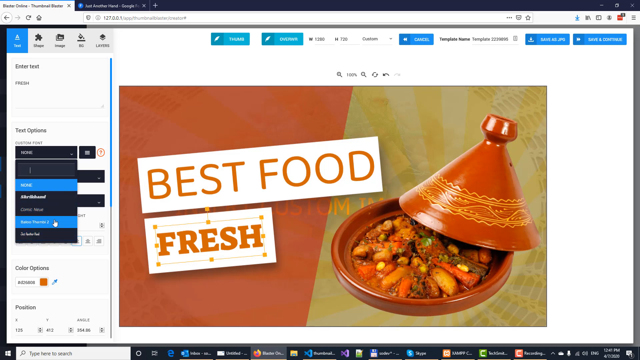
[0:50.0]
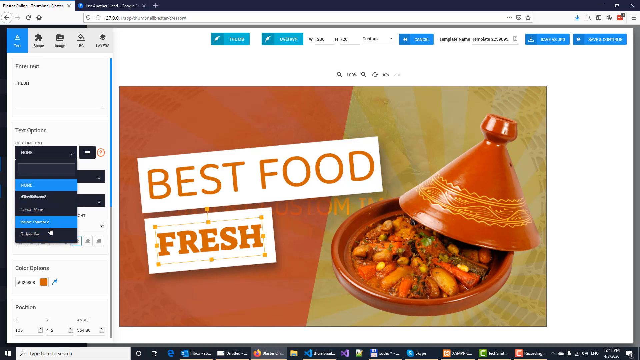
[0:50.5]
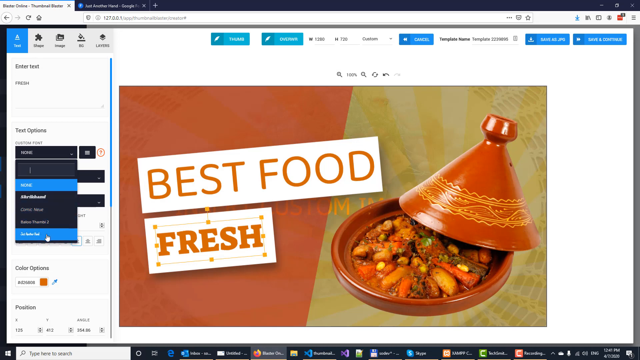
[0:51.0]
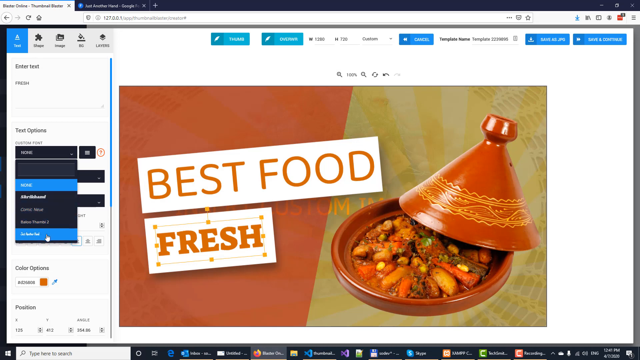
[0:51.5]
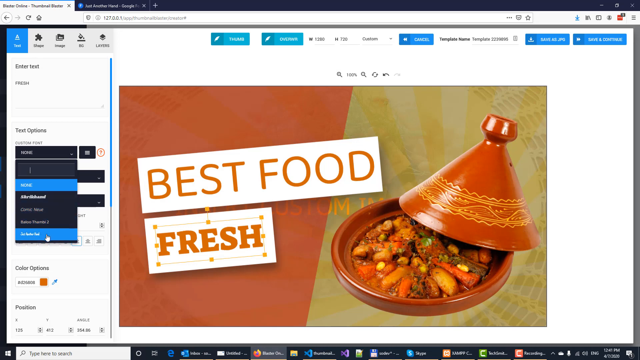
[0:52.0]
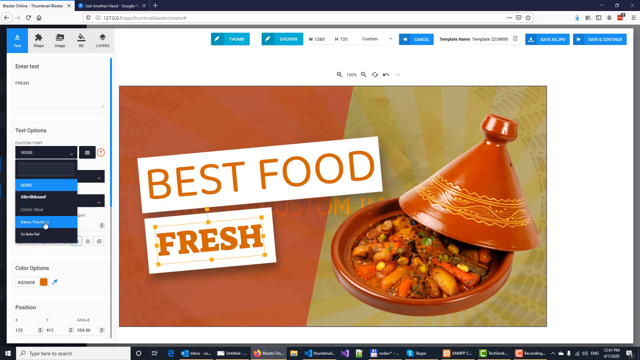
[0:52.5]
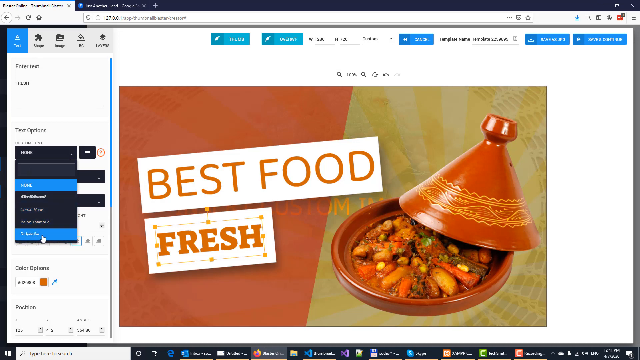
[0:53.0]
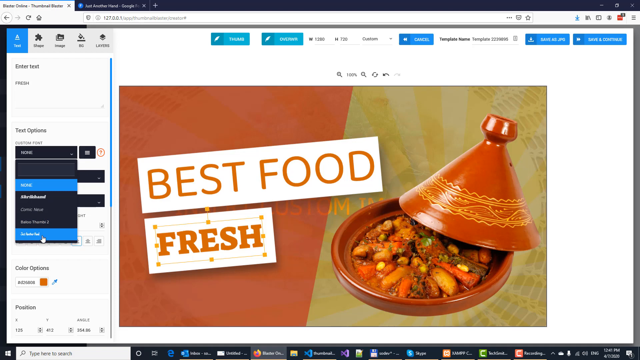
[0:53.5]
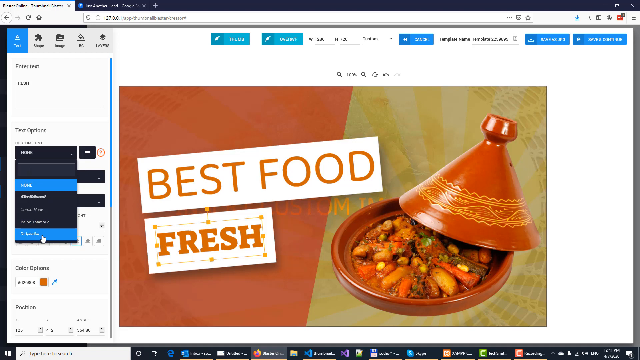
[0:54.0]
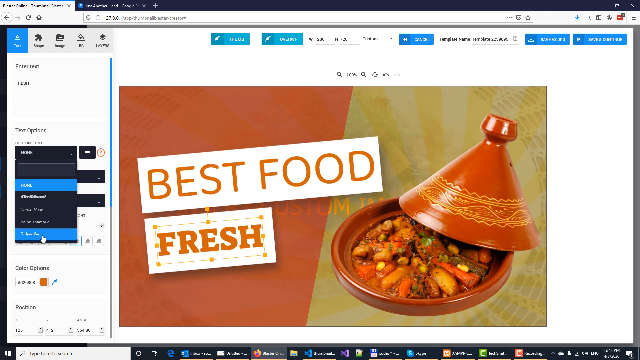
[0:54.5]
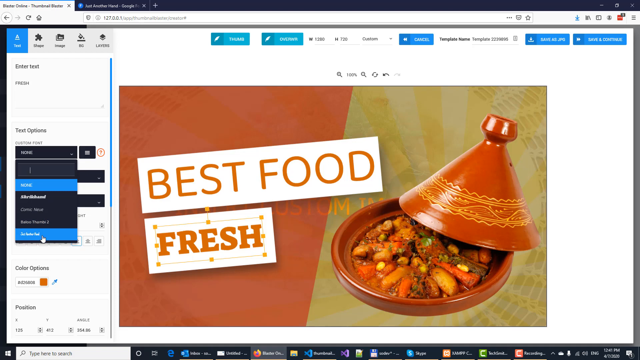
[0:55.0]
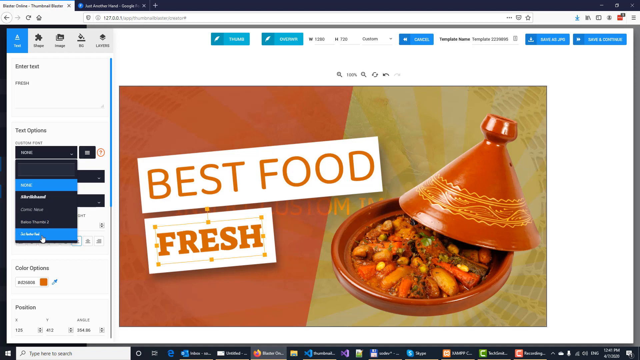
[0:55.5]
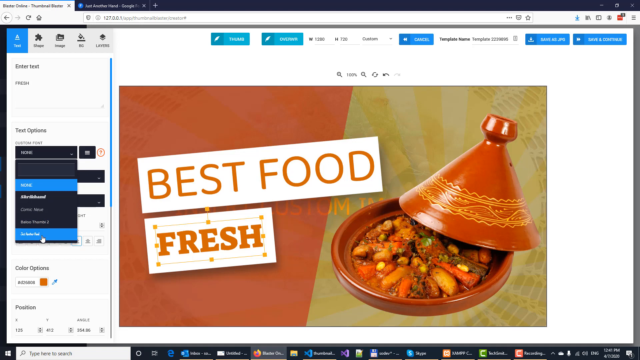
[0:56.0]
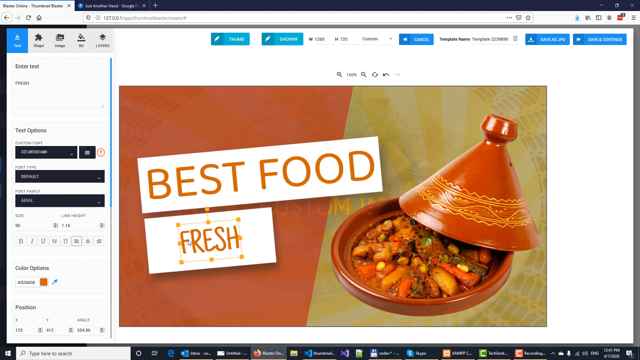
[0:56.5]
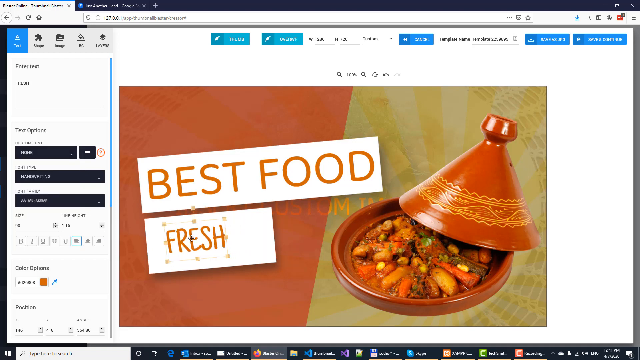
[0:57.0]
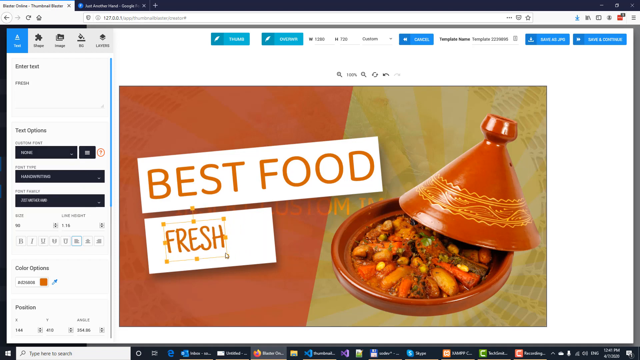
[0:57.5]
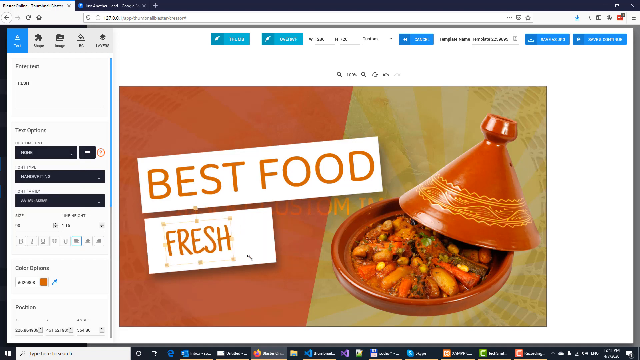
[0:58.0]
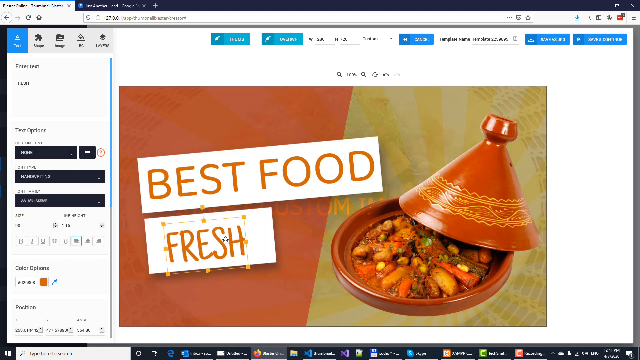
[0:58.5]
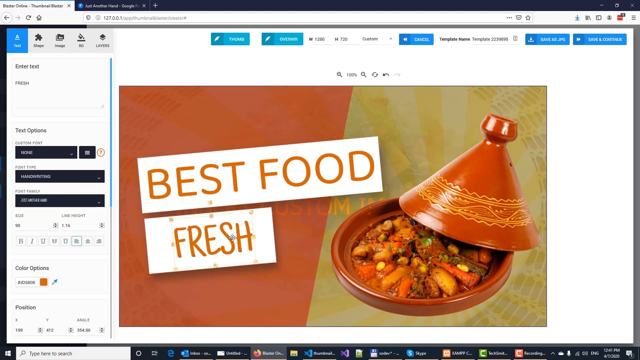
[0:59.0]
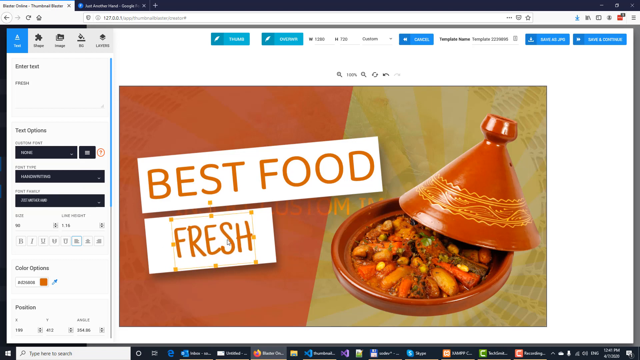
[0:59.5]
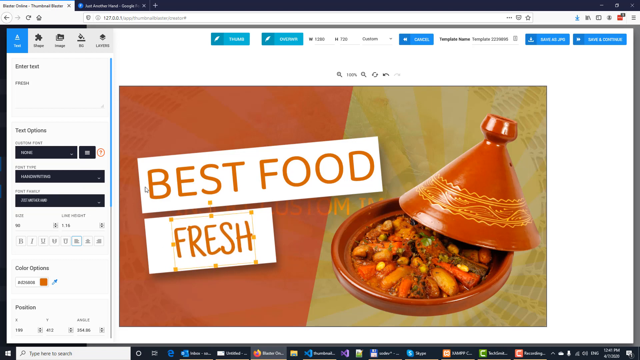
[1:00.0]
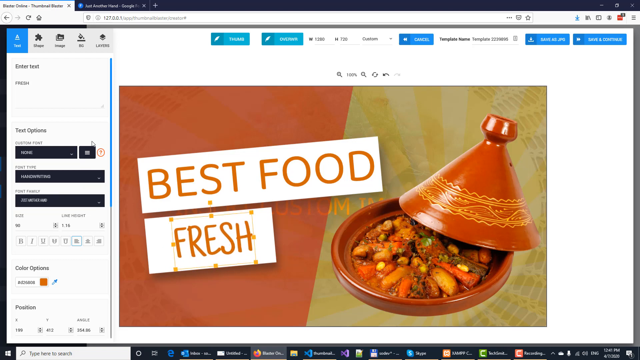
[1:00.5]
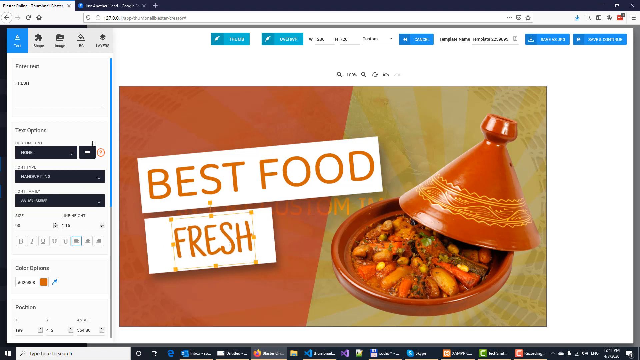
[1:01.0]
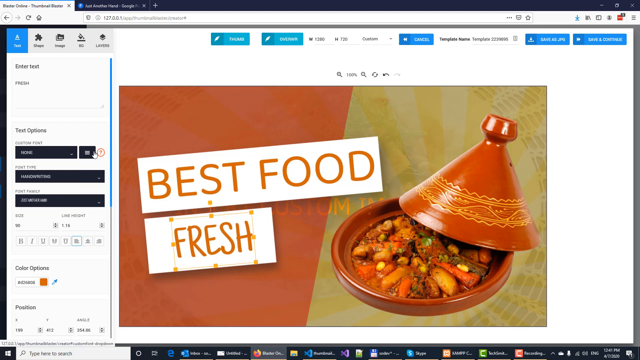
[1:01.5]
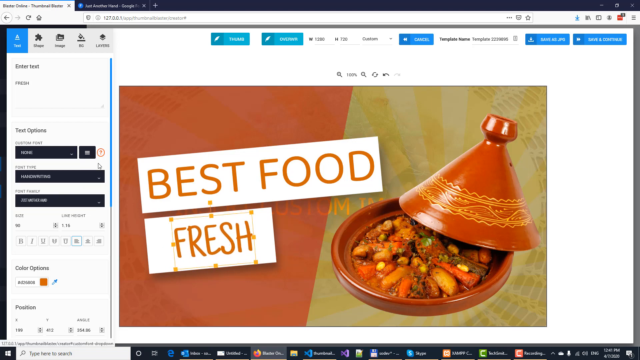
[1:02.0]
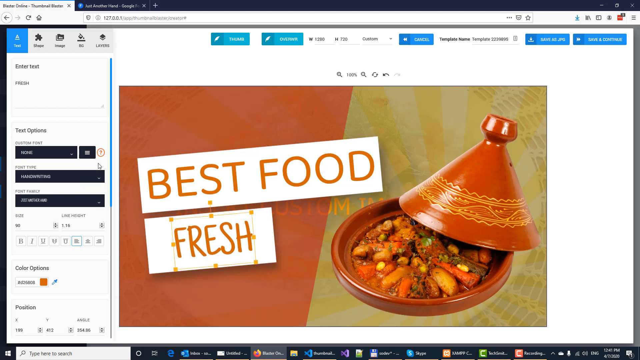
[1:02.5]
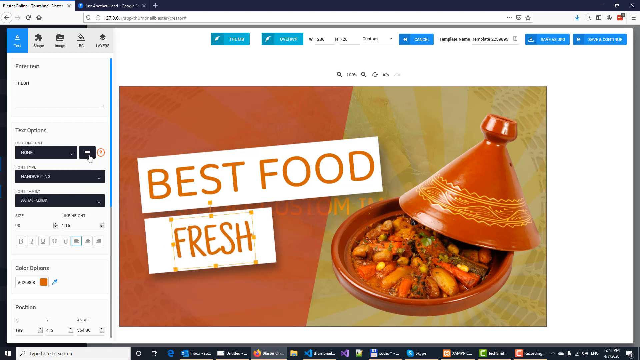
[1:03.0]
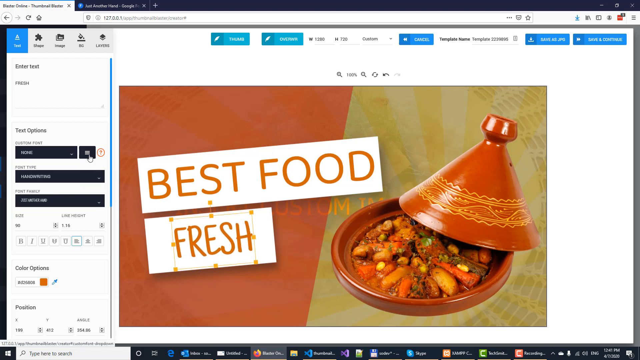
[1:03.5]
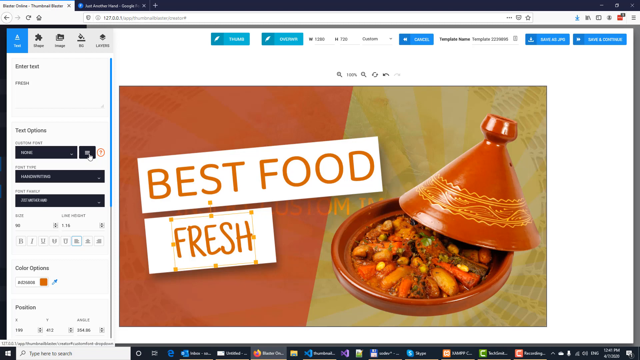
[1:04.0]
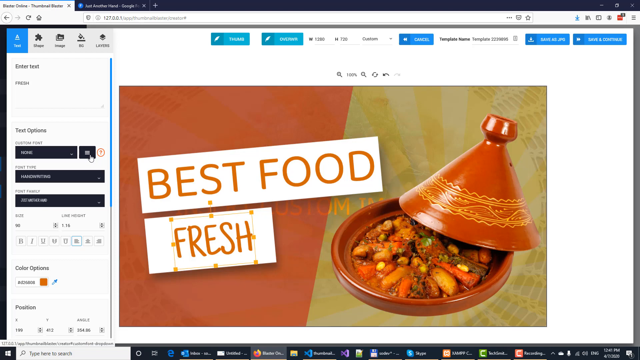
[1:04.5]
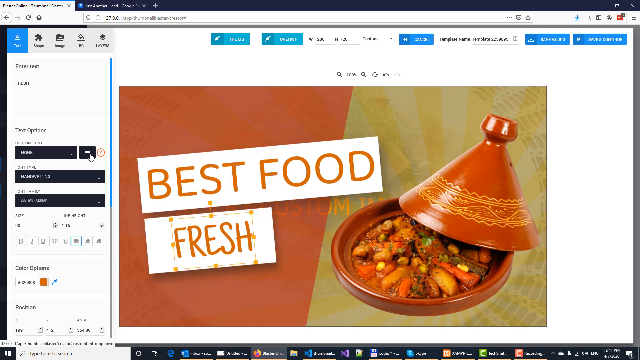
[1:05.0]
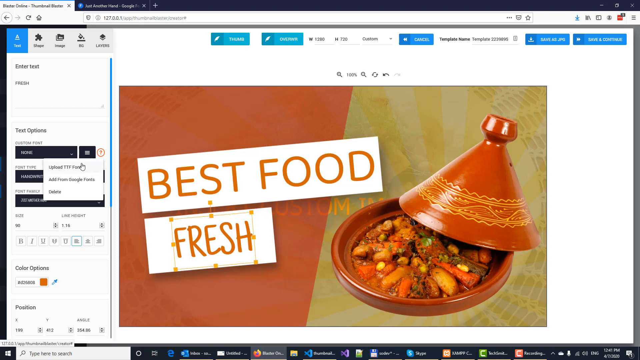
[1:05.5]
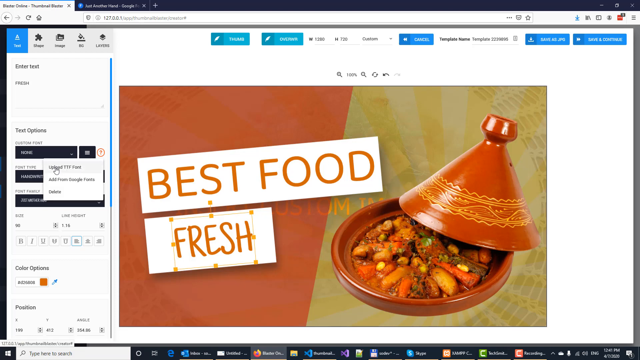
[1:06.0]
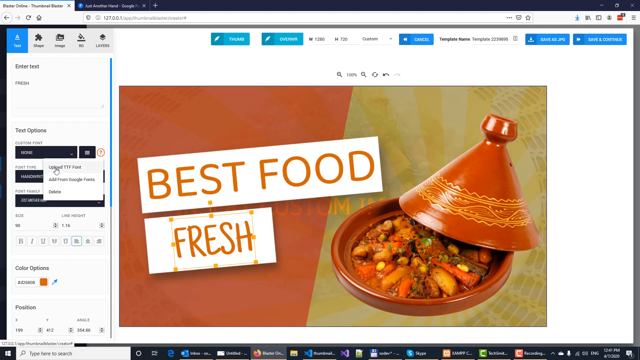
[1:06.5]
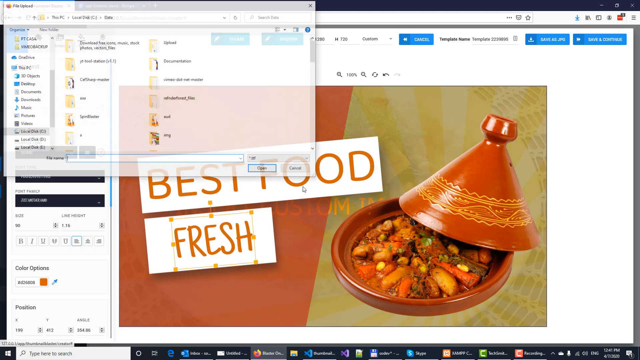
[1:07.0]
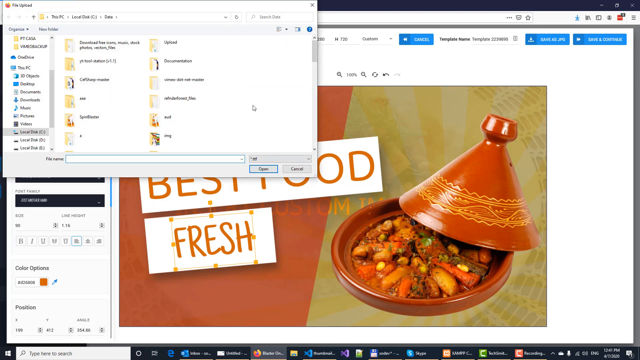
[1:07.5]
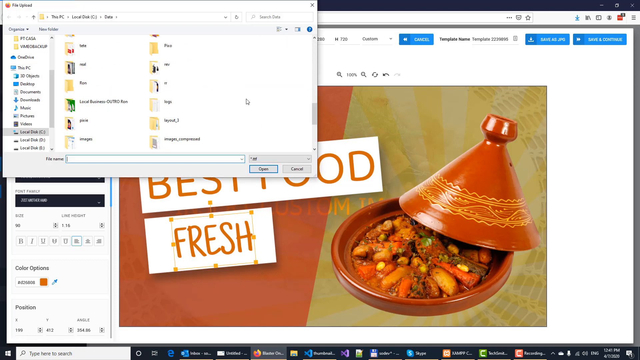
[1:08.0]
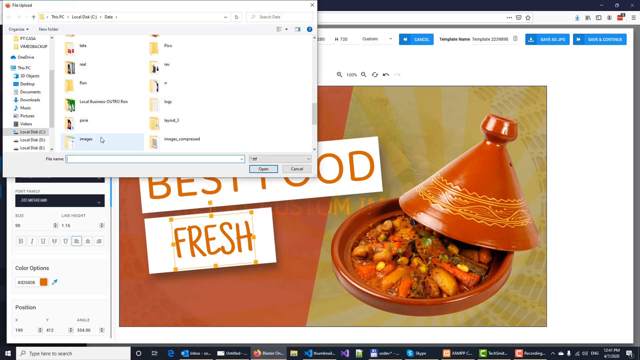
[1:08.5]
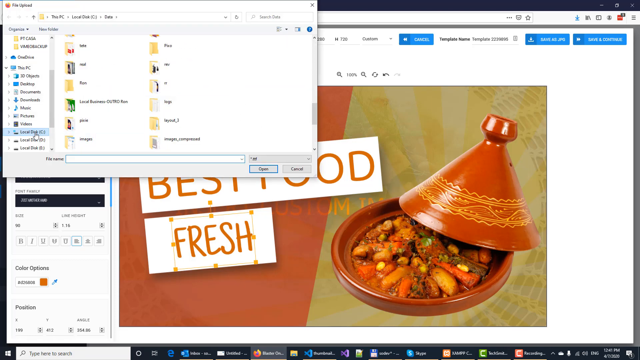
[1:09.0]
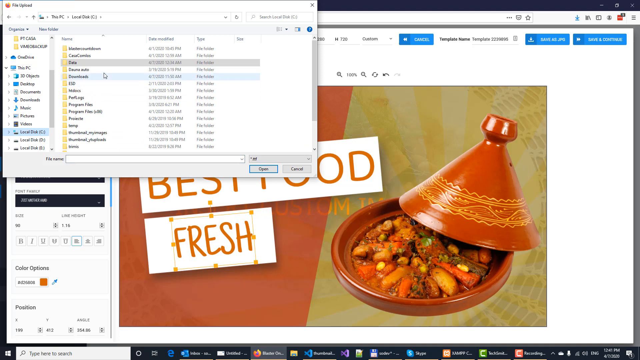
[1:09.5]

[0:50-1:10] A mouse cursor moves over the custom font section with the pull-out window on the left side of the page and selects the custom font. The word "fresh" in the advertisement changes to the custom font, and the user adjusts it on the advertisement. The user then clicks something that opens their files, goes through the files, and clicks on something. The advertisement reads "best food fresh" in orange on a white background and shows an image of a fancy vegetable dish in an orange bowl. The entire browser is visible, including the tabs at the top and the windows at the bottom.